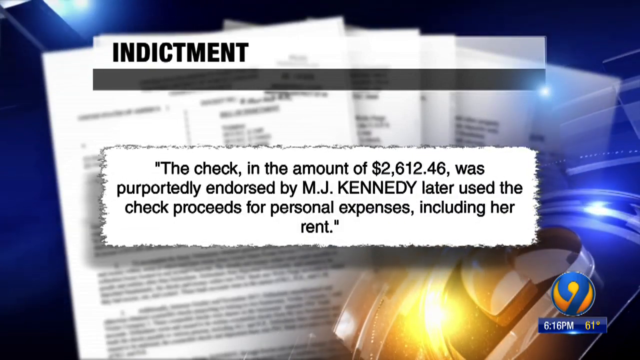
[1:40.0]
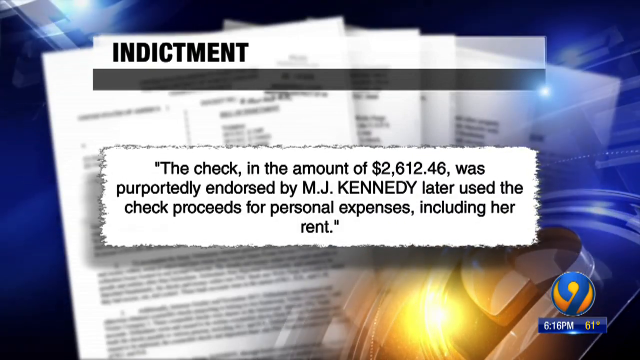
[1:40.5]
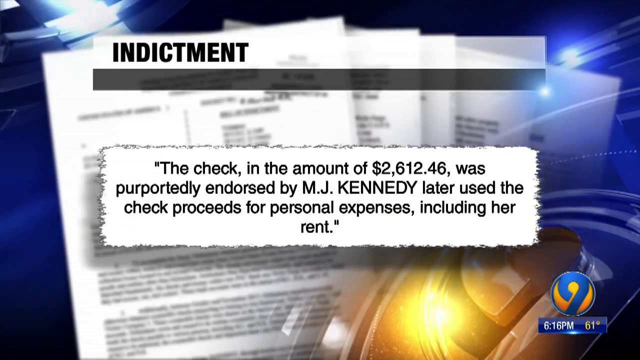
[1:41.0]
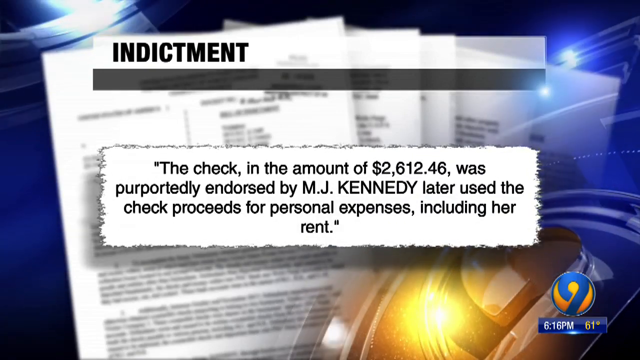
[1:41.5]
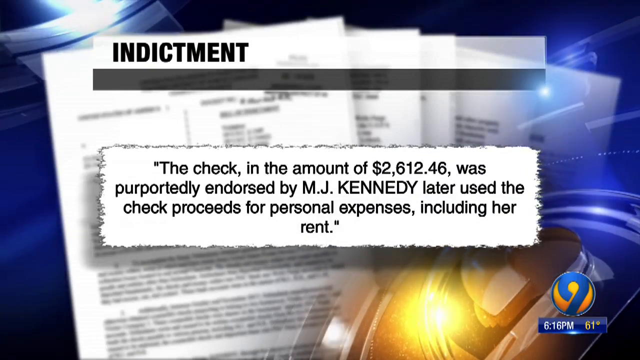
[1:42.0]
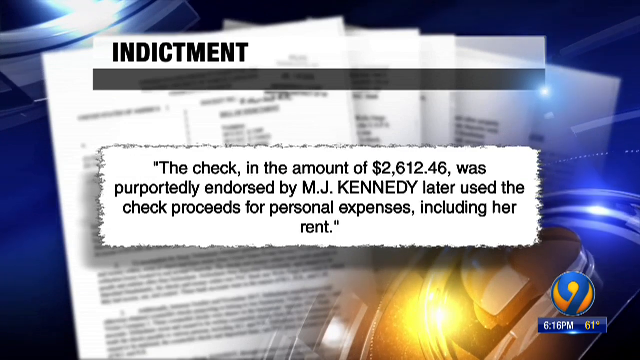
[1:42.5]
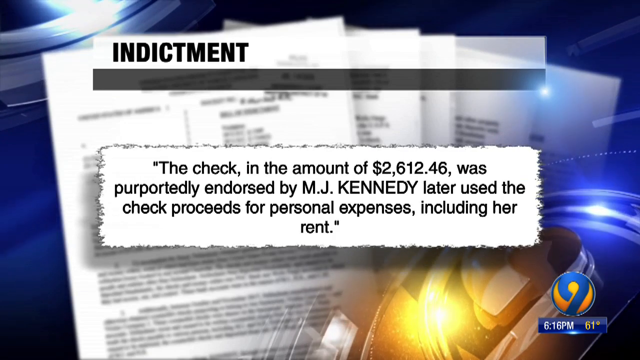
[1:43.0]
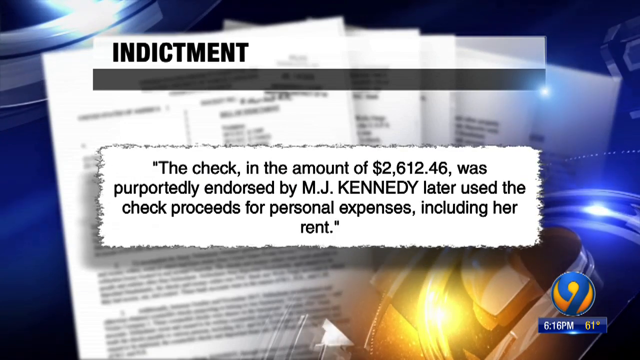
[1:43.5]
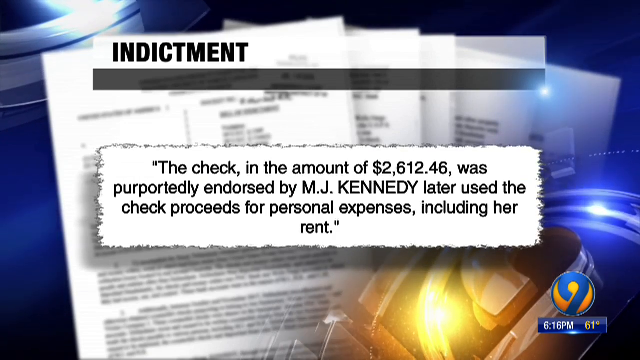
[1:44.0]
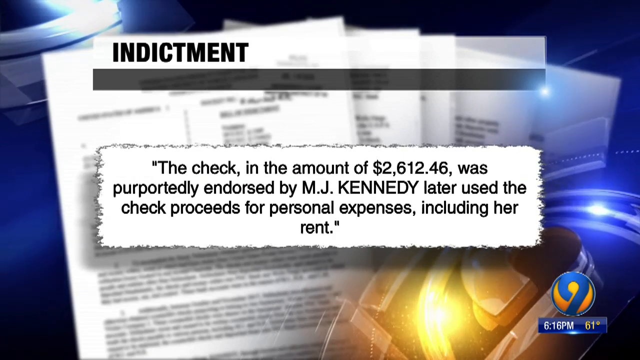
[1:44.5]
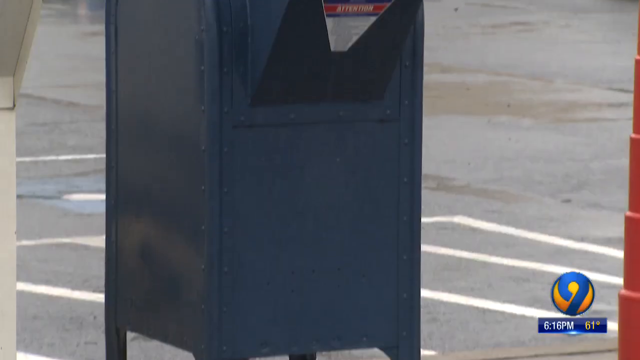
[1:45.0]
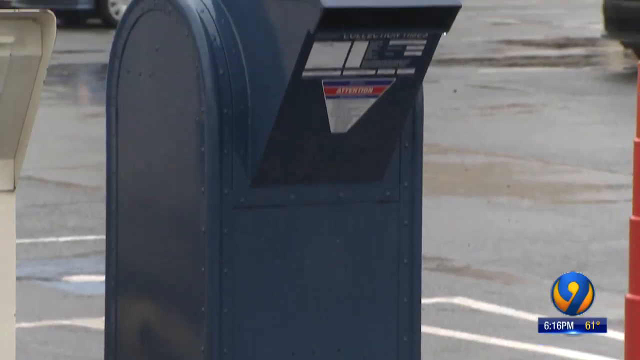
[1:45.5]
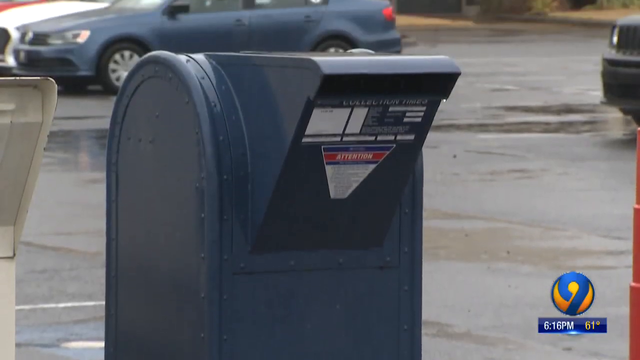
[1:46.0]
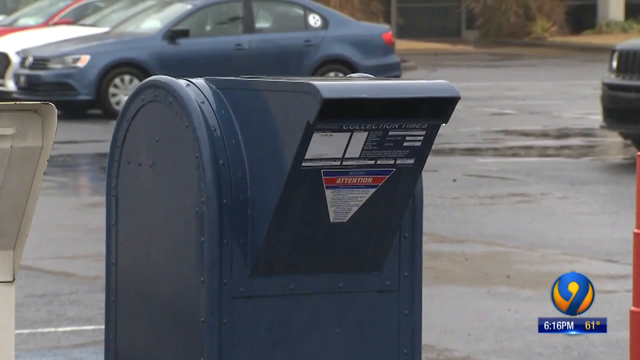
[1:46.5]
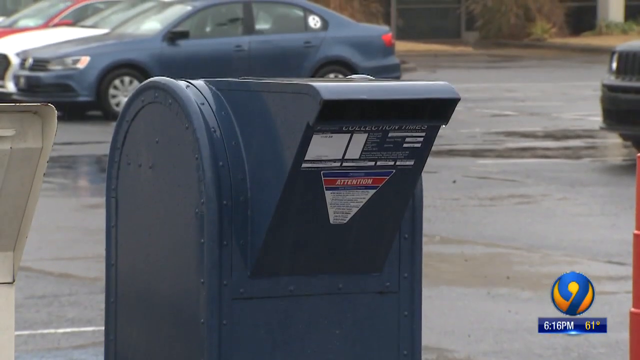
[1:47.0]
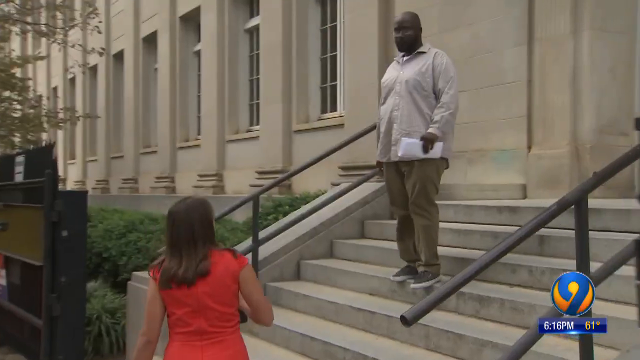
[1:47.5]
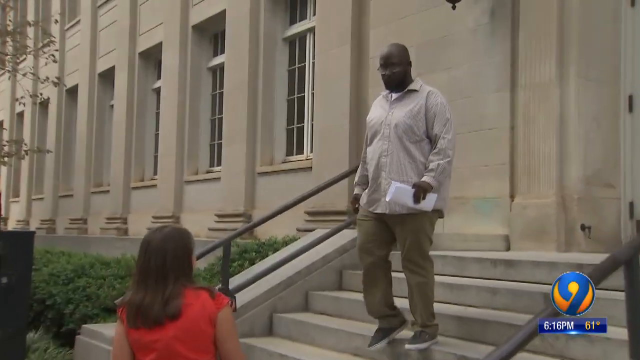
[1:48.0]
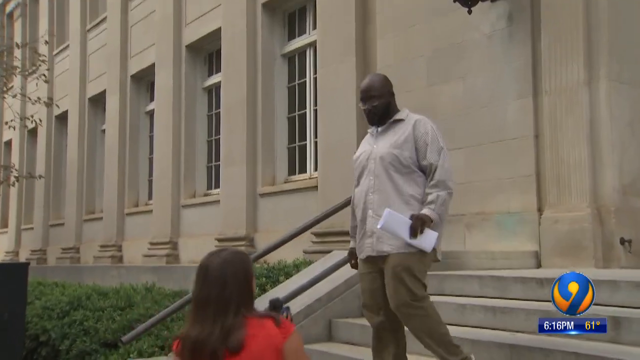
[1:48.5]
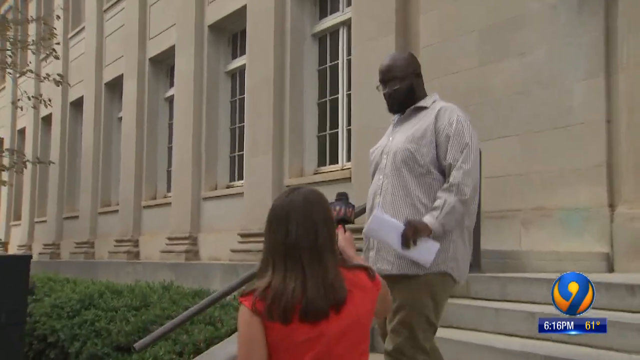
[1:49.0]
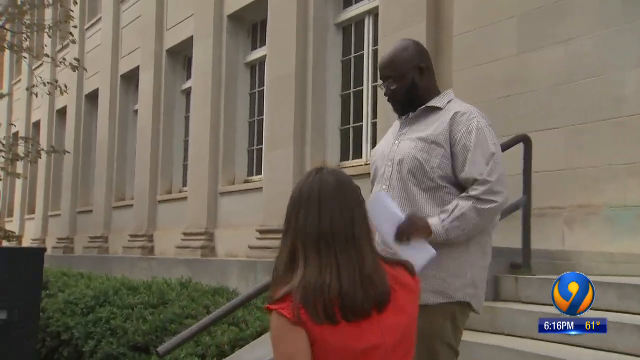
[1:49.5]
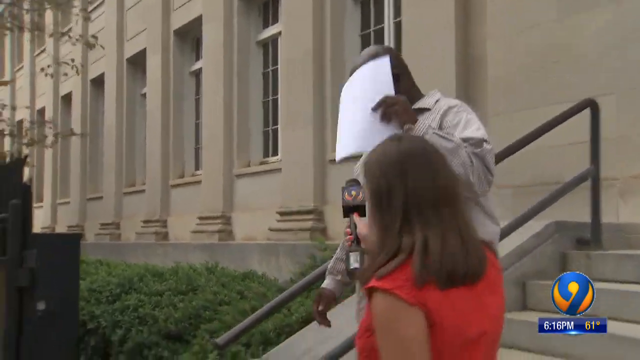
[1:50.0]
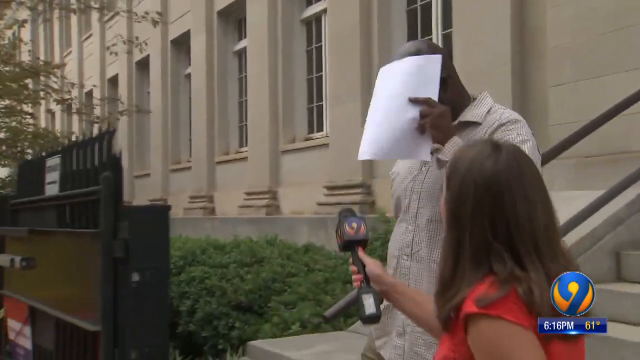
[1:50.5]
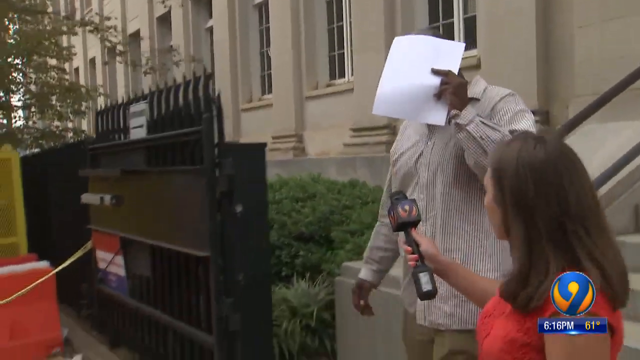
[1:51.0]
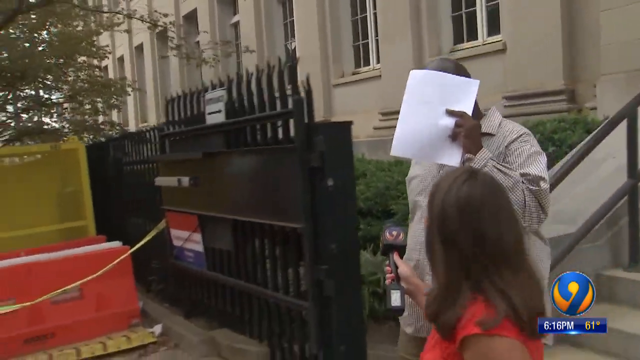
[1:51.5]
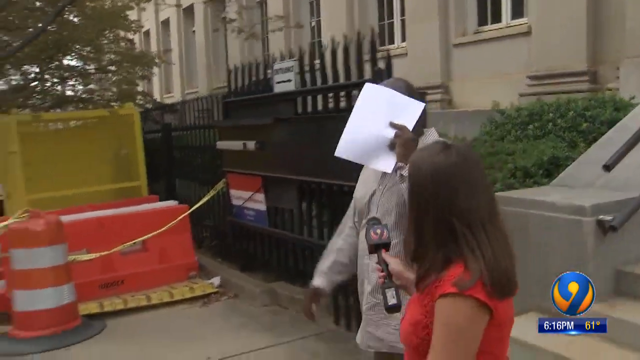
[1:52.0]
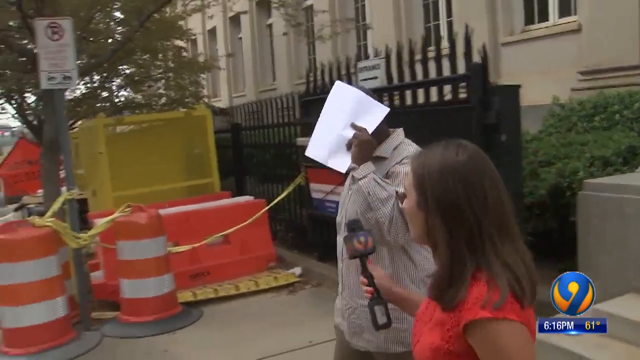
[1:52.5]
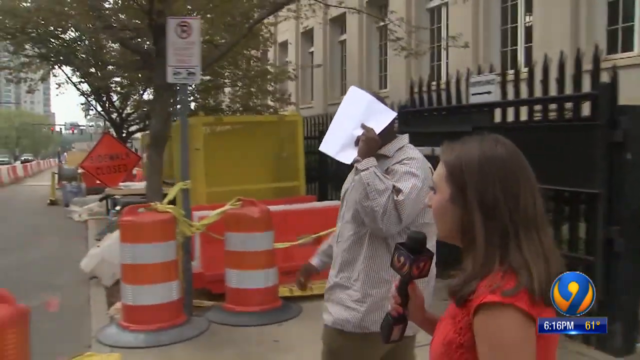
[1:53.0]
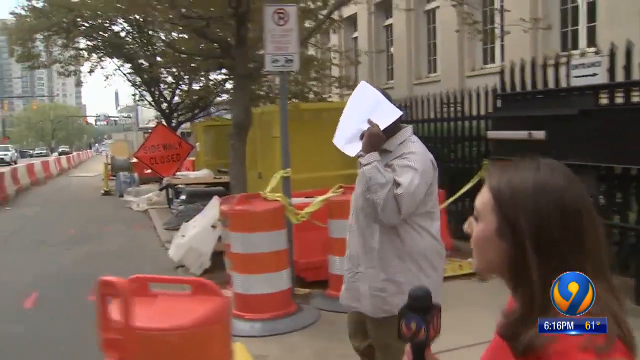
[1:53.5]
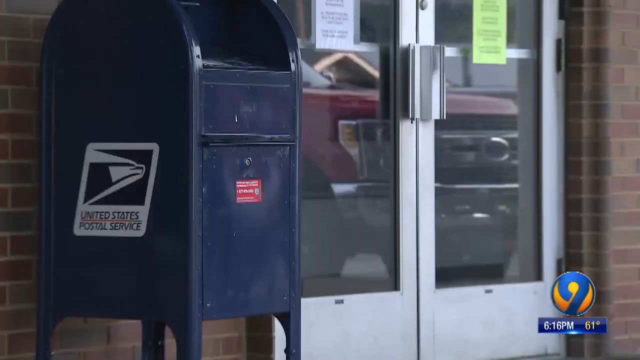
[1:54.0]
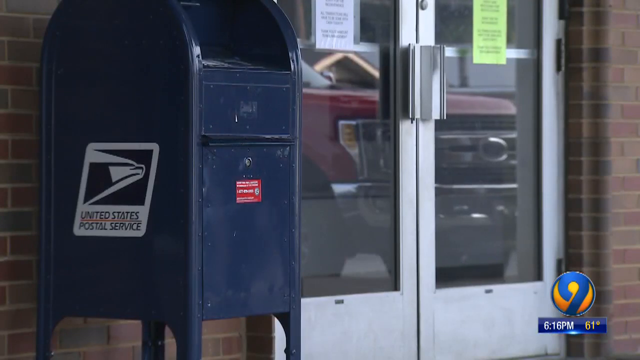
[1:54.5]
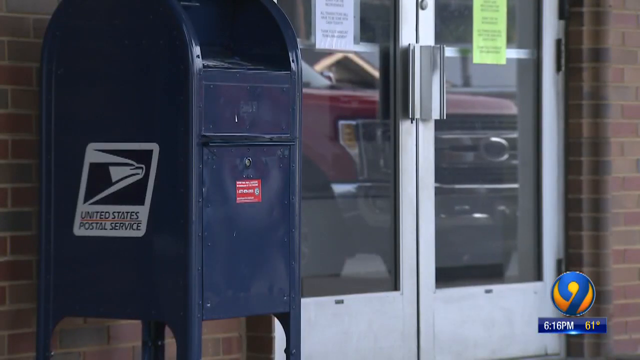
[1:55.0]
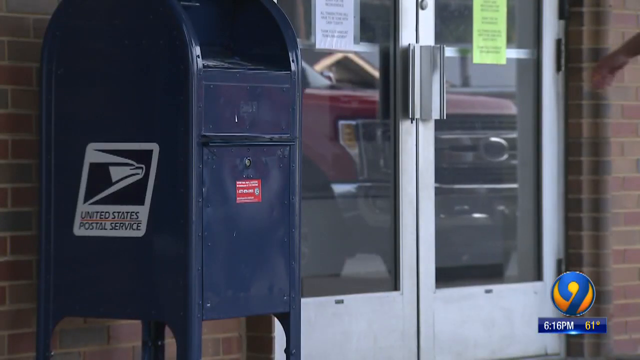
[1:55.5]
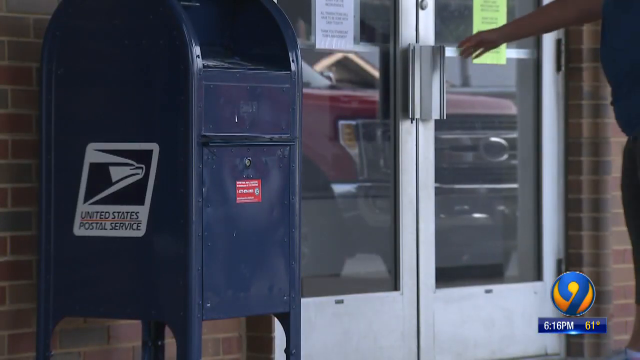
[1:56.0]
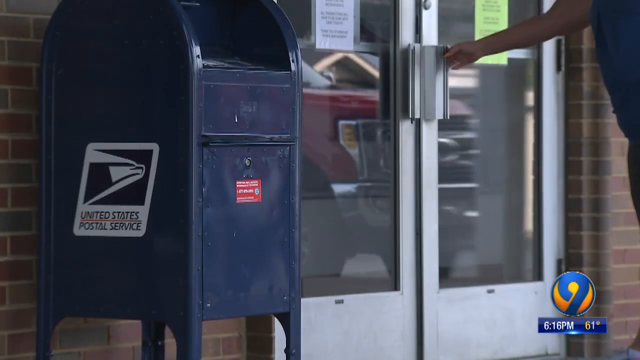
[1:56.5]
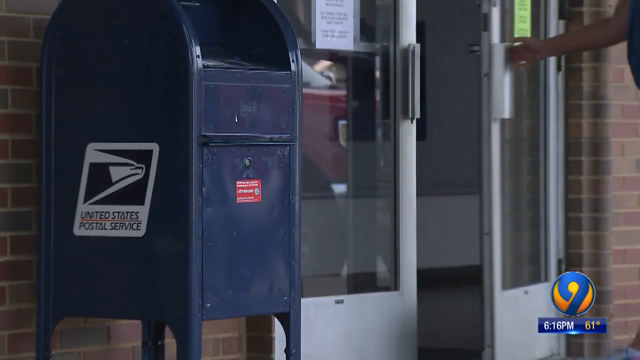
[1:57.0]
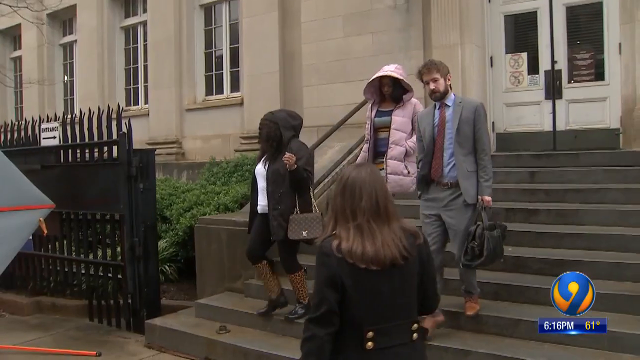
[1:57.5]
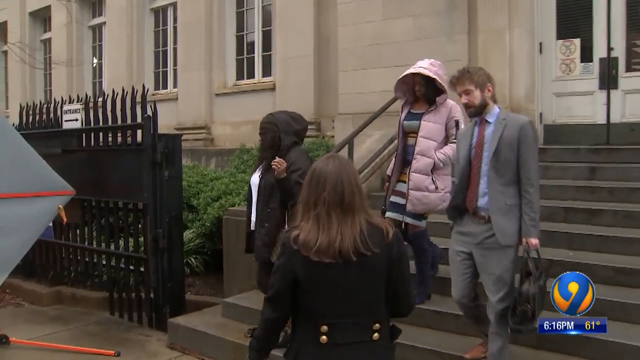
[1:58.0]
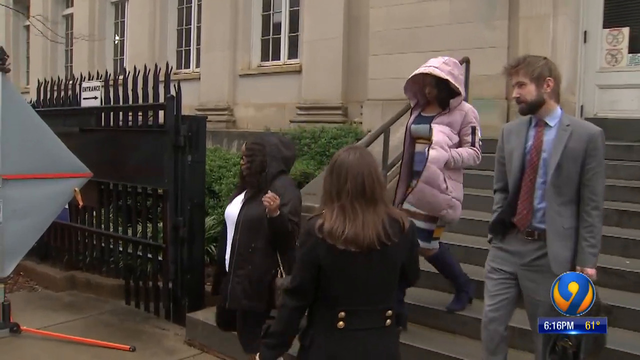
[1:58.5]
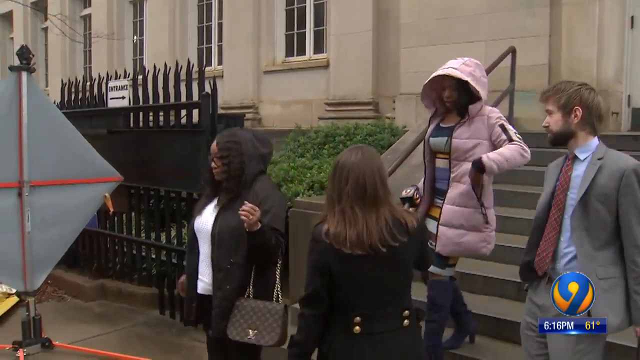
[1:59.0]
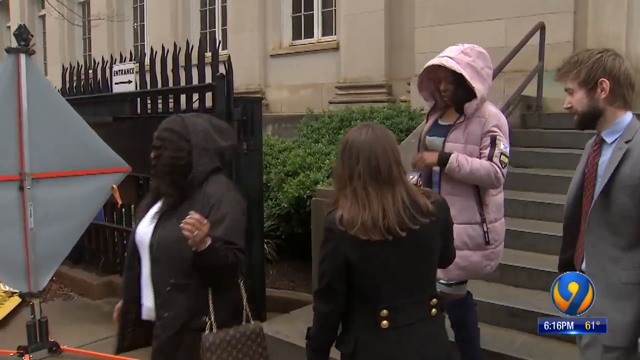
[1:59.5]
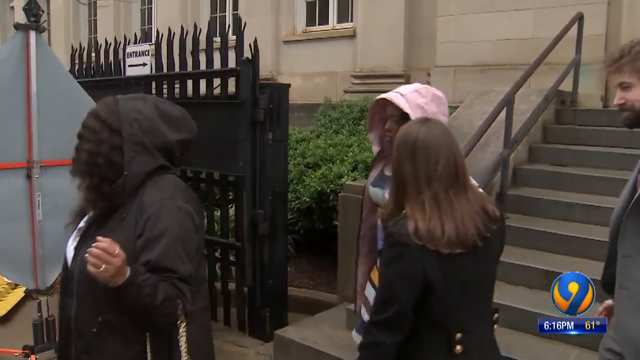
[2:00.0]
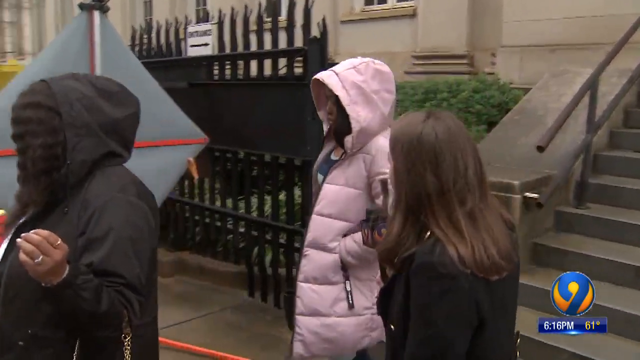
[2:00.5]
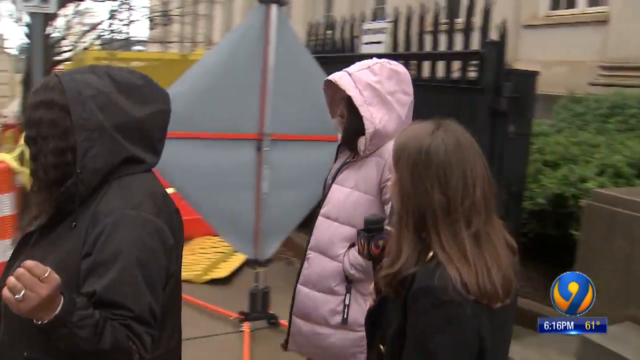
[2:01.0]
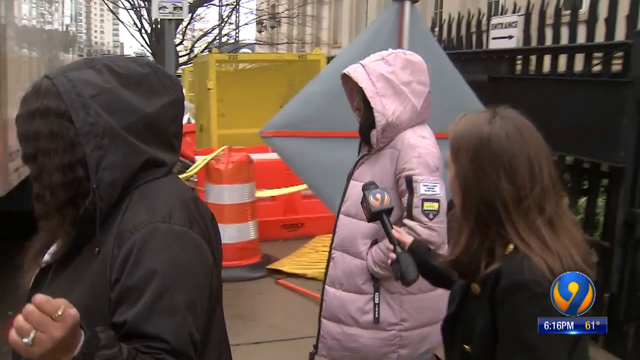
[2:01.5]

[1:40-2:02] A screen about an indictment reads "the check in the amount of $2,612.46 was purportedly endorsed by MJ Kennedy, later used the check proceeds for personal expenses, including a rent", with what seem to be court documents behind it that cannot be read. The scene changes to briefly show a letterbox. Next, a Black man wearing glasses, a shirt and trousers of unclear colour, perhaps between 40 and 50 years old, stands on the stairs of a building that appears to be a courthouse. Below him is a correspondent reporter in a red dress, a white woman with brown hair, trying to get him to comment, but he is not interested and covers the other side of his face with papers. Road cones, a yellow thing and a sign reading "sidewalk closed" can be seen in the area. The scene briefly changes to another letterbox with a door next to it, which someone seems to be opening. The scene then returns to the first scene: the lady in a pink coat and the lady in a black coat, accompanied by their lawyer. She makes clear she is not interested in commenting to the reporter by raising her hand.